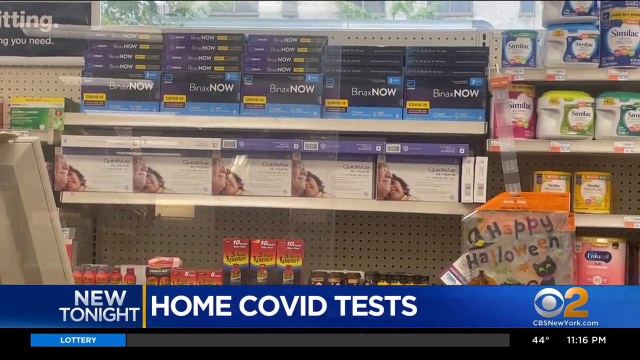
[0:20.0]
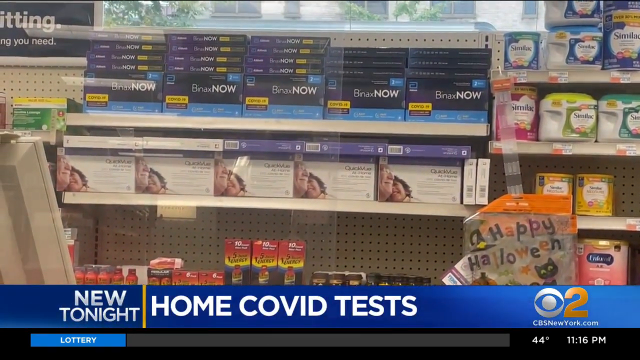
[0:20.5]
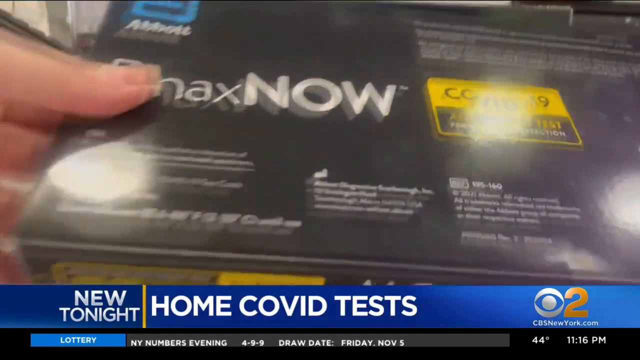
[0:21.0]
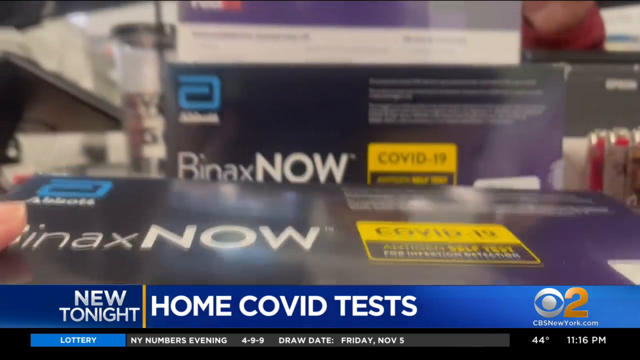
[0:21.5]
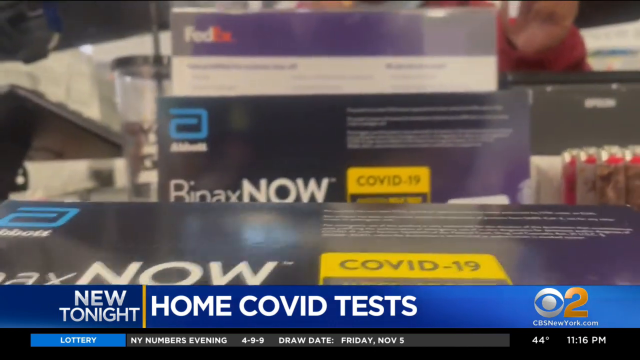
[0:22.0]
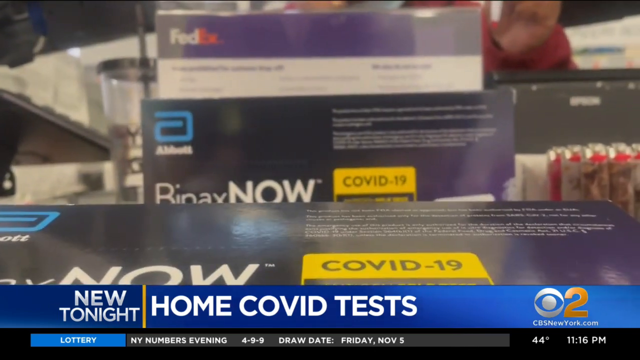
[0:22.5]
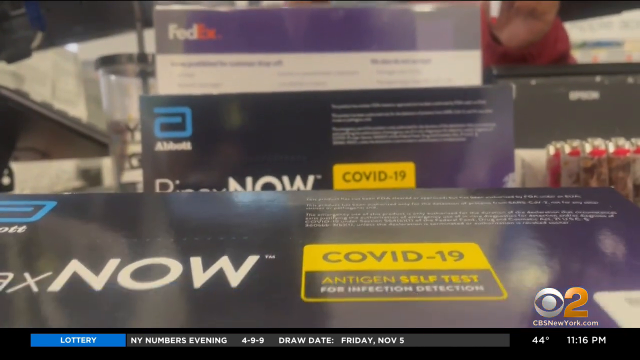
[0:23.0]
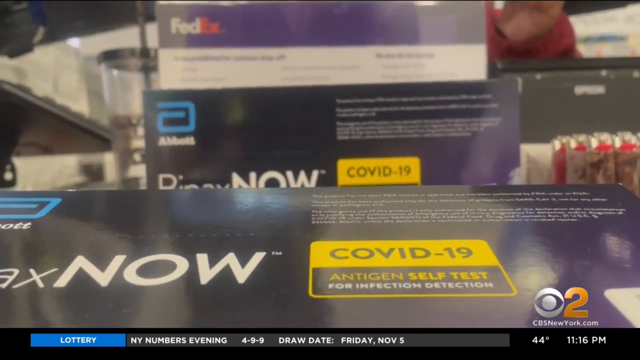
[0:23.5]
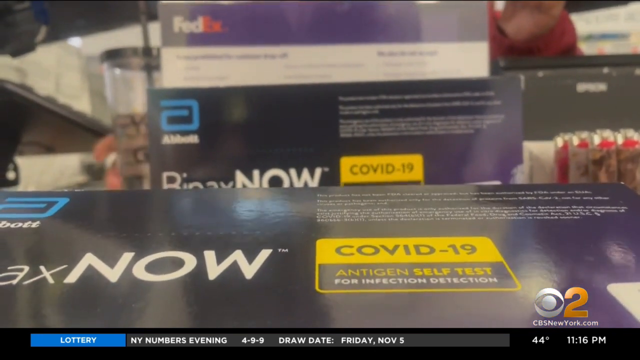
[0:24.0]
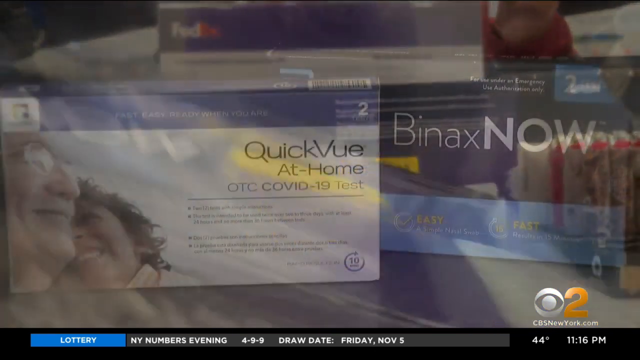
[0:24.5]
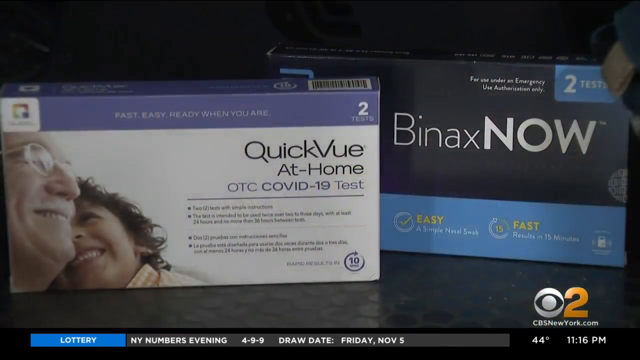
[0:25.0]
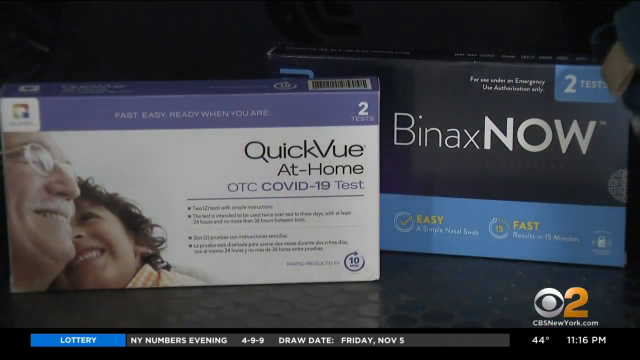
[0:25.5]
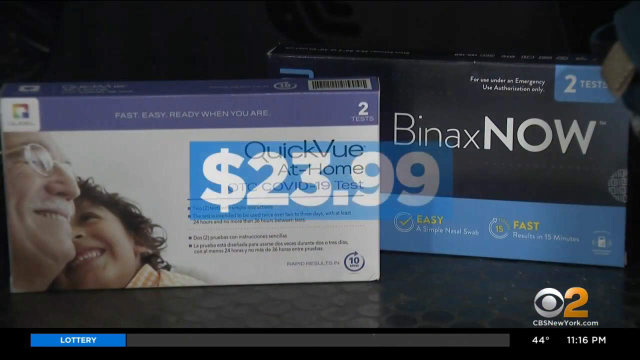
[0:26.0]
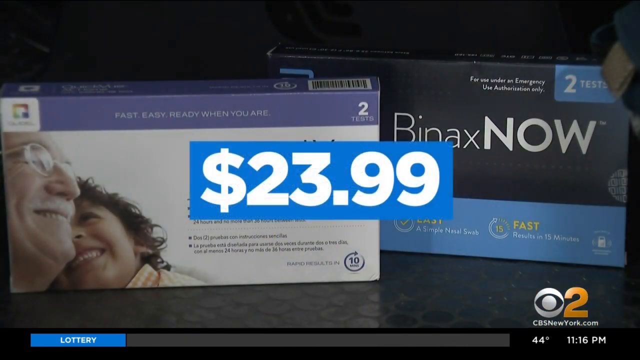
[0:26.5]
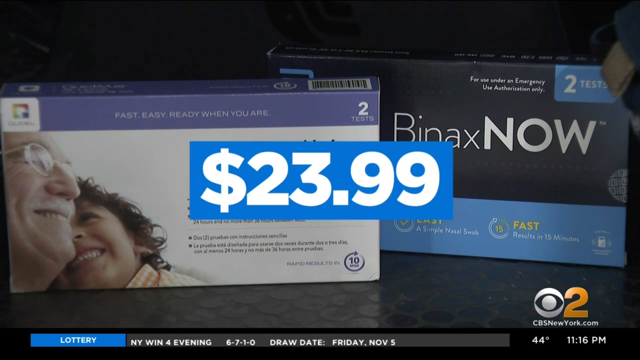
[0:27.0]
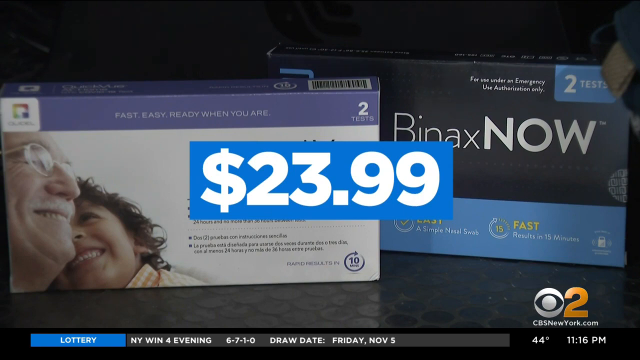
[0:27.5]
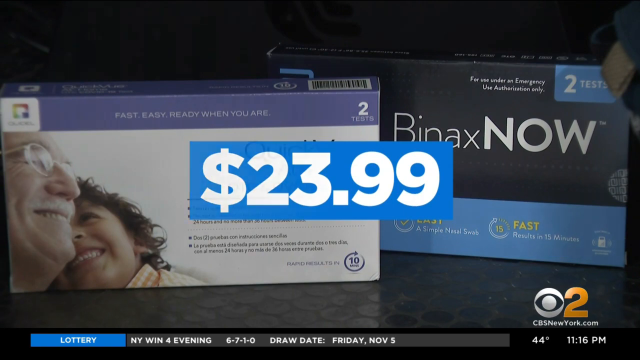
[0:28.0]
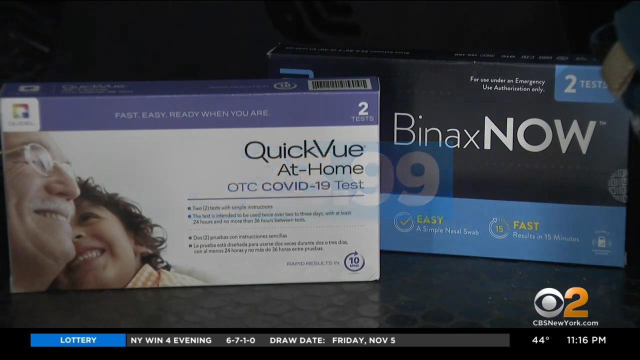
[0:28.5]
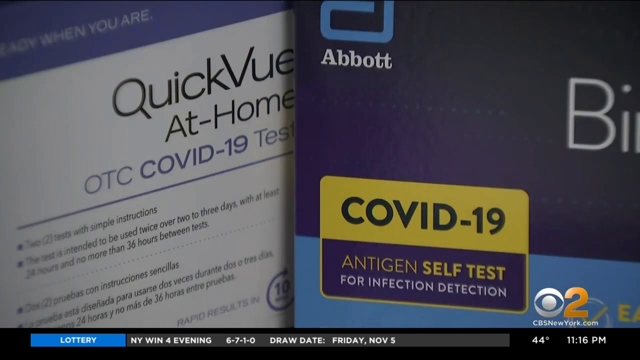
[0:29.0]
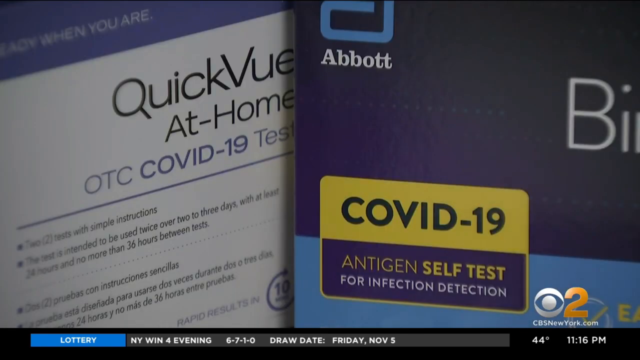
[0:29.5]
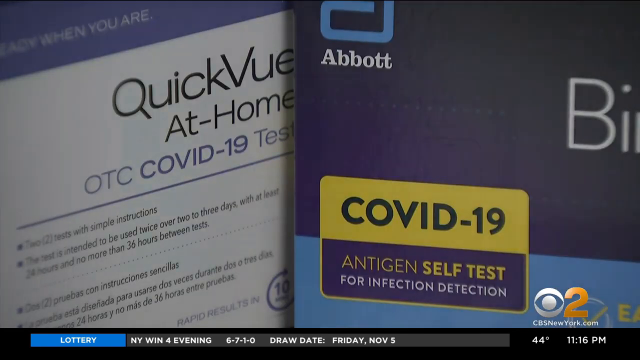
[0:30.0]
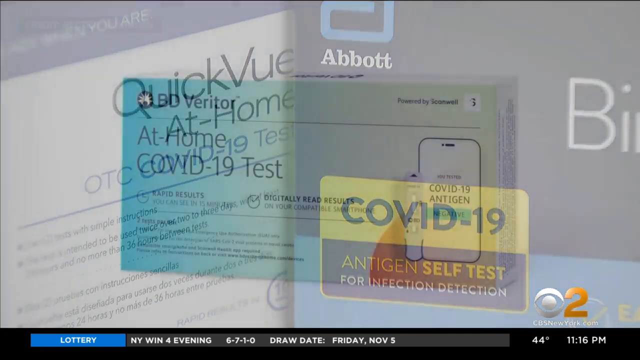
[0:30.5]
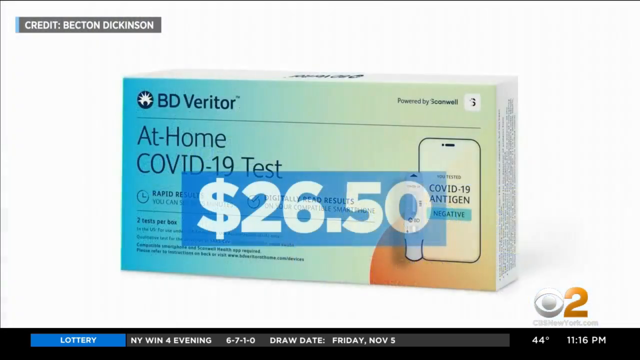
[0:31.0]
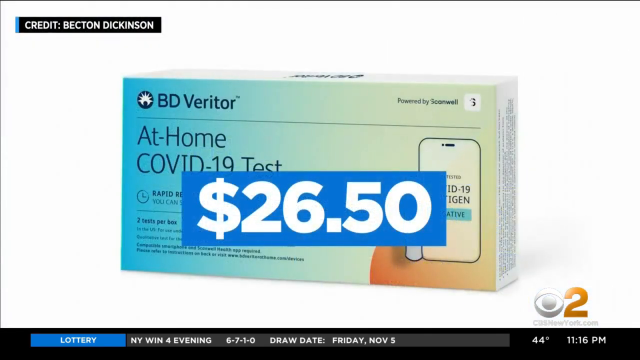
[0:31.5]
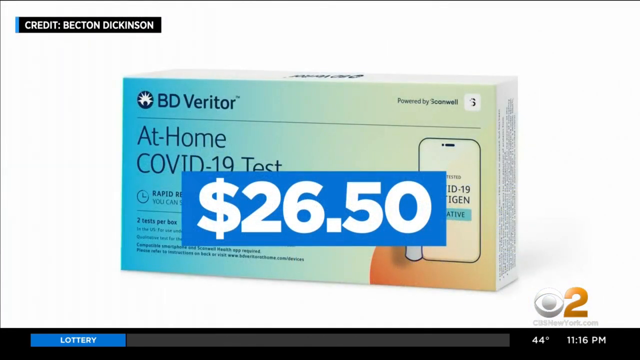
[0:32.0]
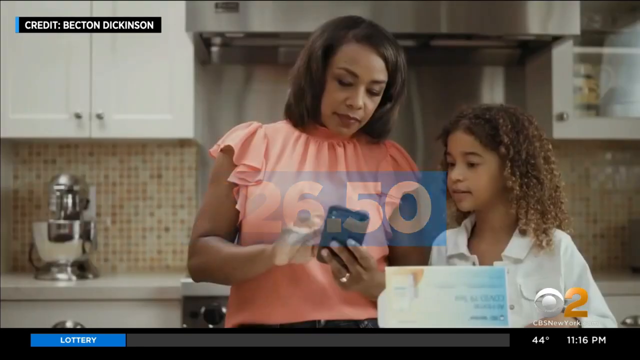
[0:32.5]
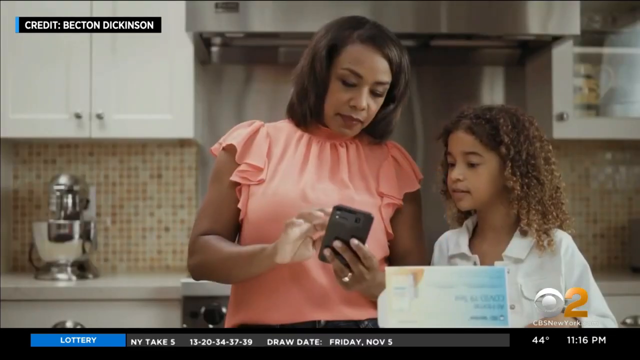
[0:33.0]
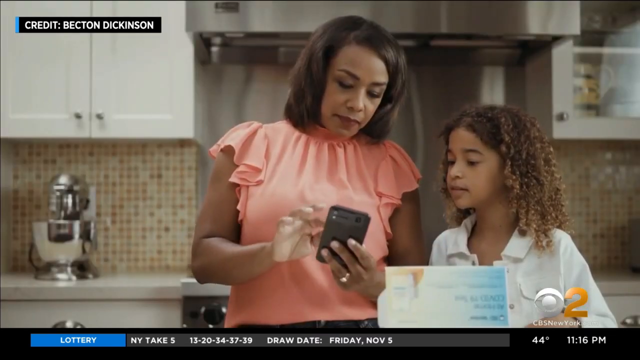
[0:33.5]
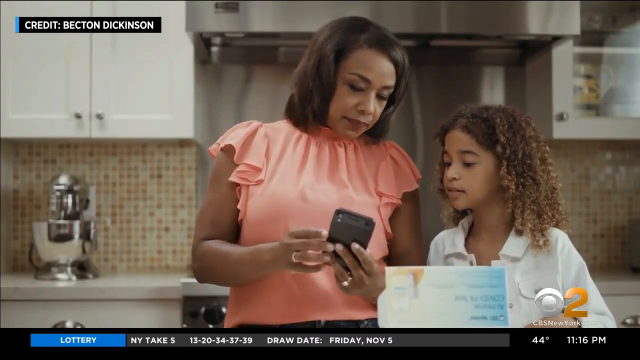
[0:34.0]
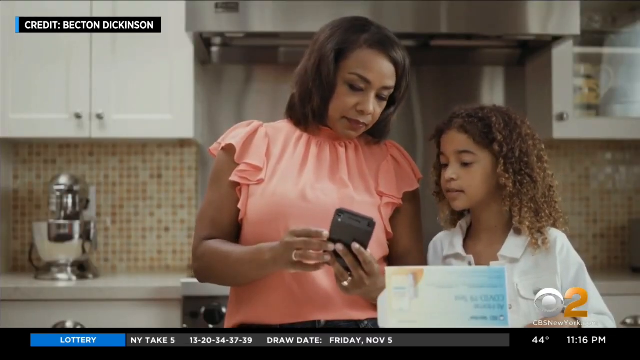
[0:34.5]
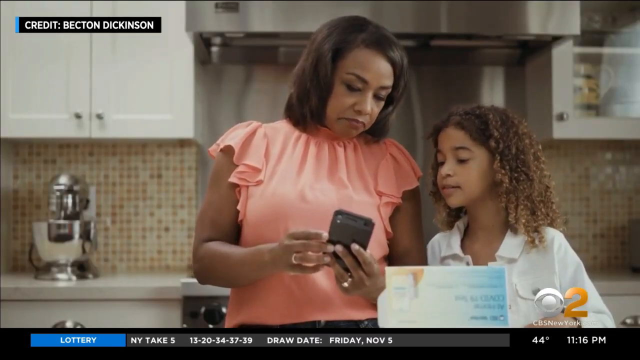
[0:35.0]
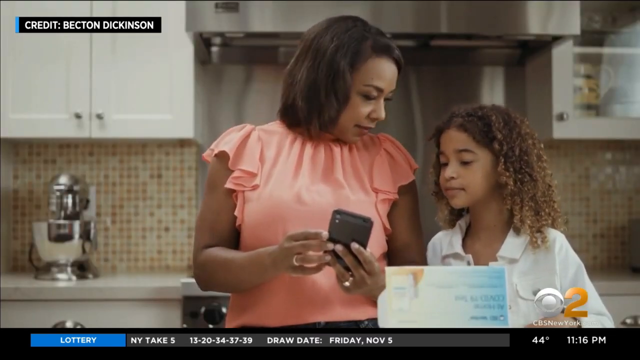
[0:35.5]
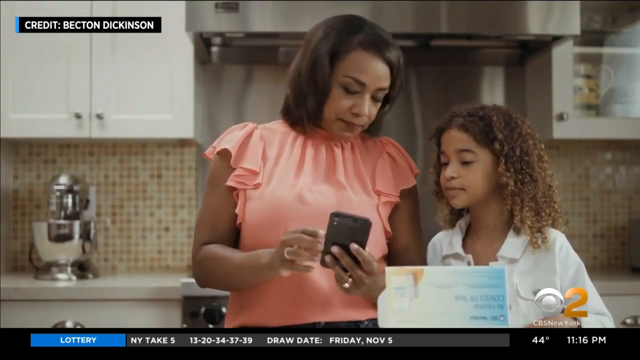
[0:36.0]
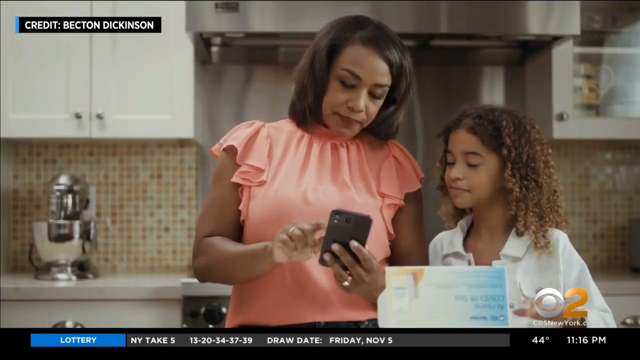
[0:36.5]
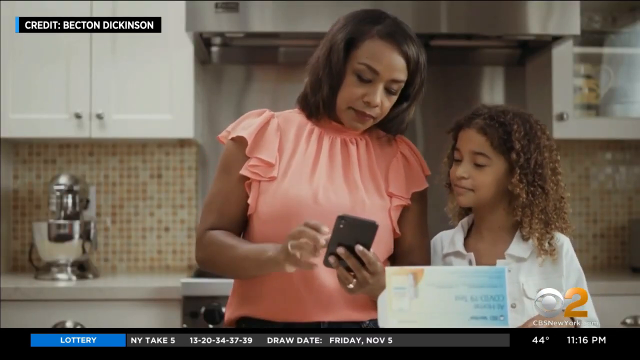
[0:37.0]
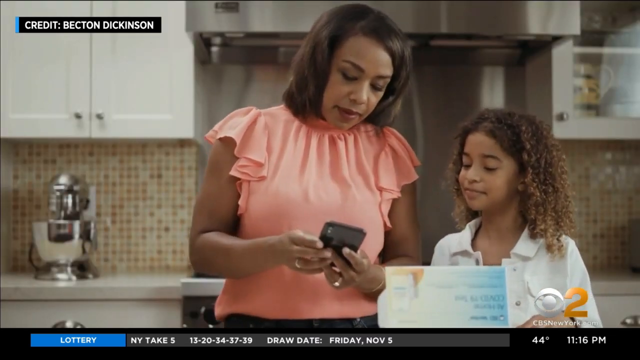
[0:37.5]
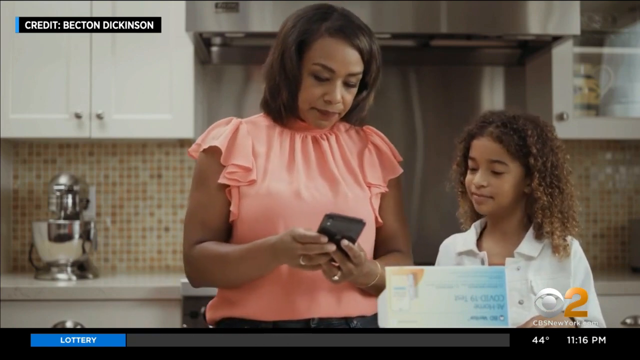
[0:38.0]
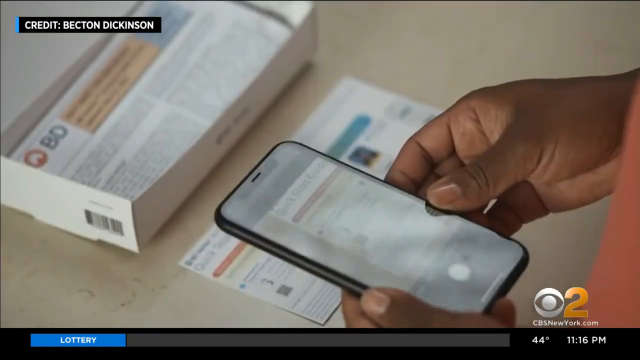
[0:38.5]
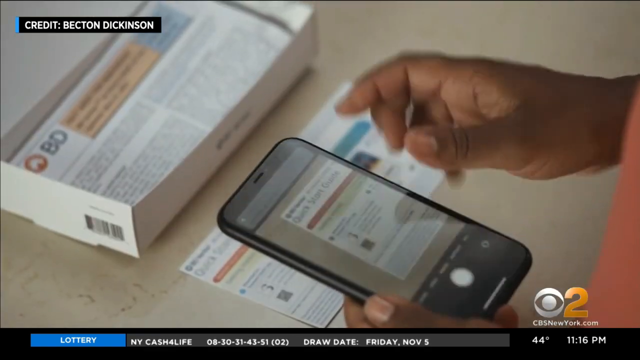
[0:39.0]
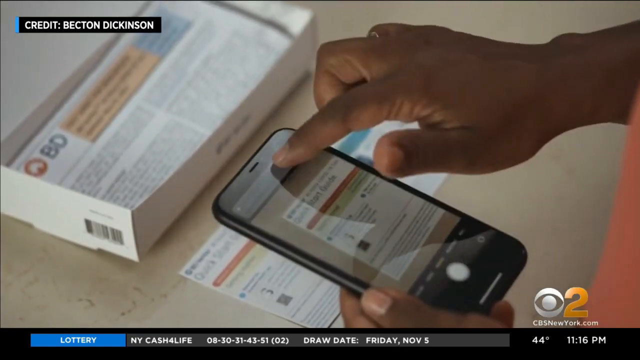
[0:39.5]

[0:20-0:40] A very close-up shot shows the at-home COVID-19 test called BinaxNOW. It is a larger package with a blue symbol in the top left-hand corner, and underneath the symbol it says "Abbott." A yellow and black box on the front of the package reads "COVID-19 Antigen Self-Test for Infection Detection." A FedEx box is visible behind it. The video then shows another COVID test, a different brand, next to the BinaxNOW test. A box showing $23.99 pops up over that brand; that box has two people on it, and it is a quick view at-home COVID test. The screen then changes to a completely different COVID test with a different price, as the video shows the different tests available and their prices.